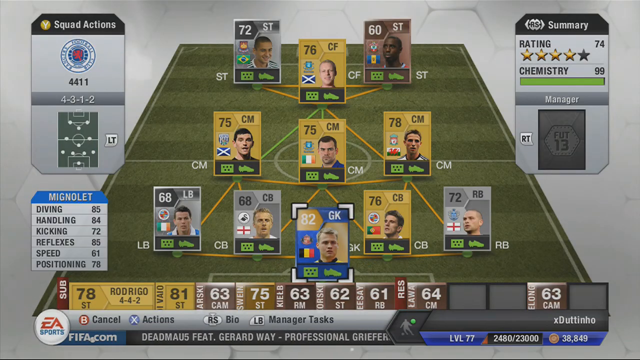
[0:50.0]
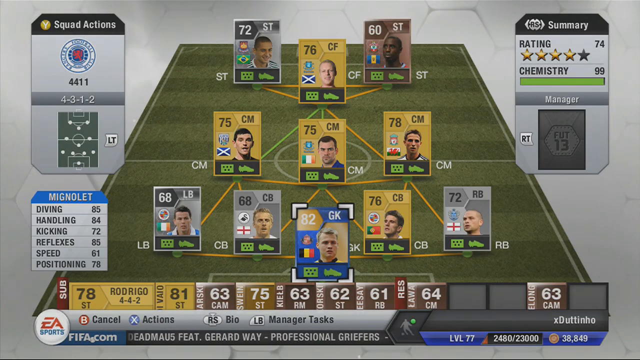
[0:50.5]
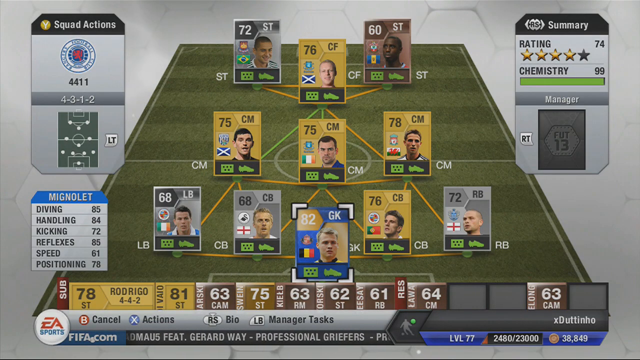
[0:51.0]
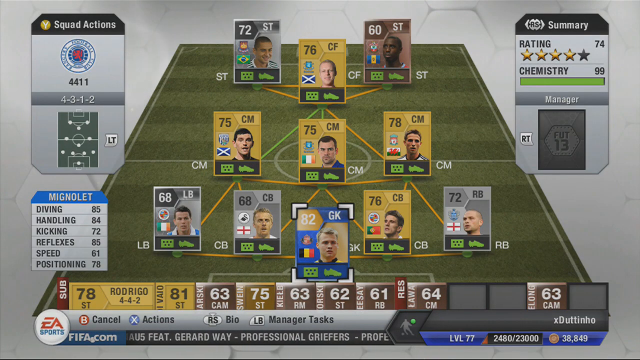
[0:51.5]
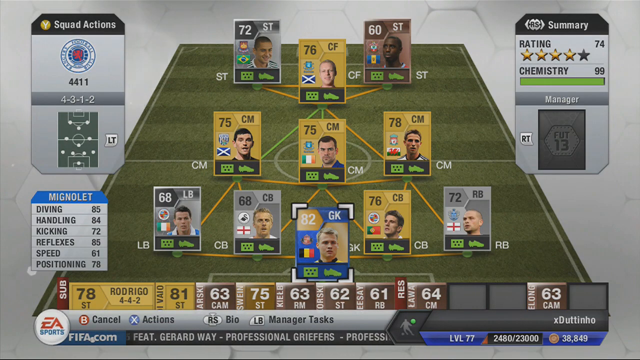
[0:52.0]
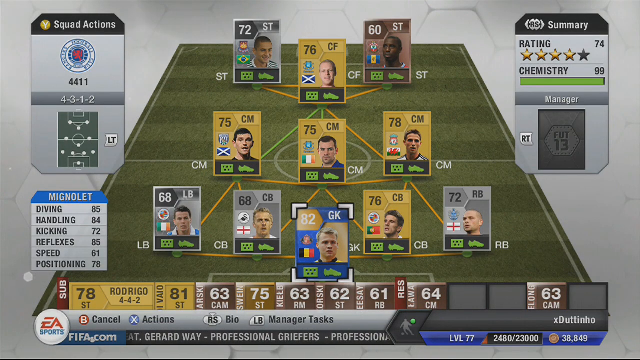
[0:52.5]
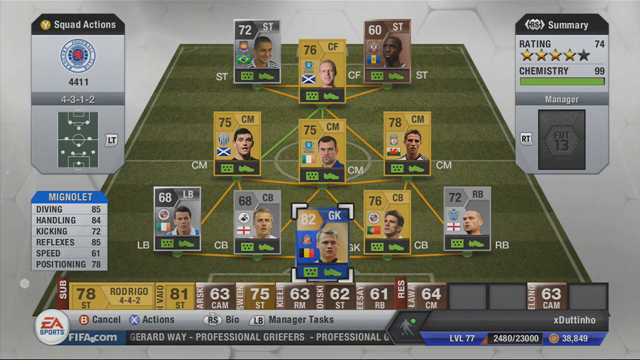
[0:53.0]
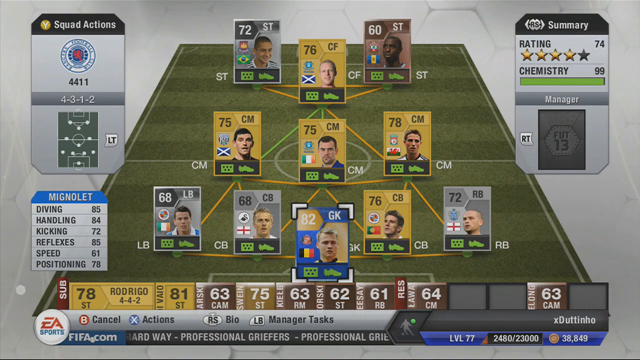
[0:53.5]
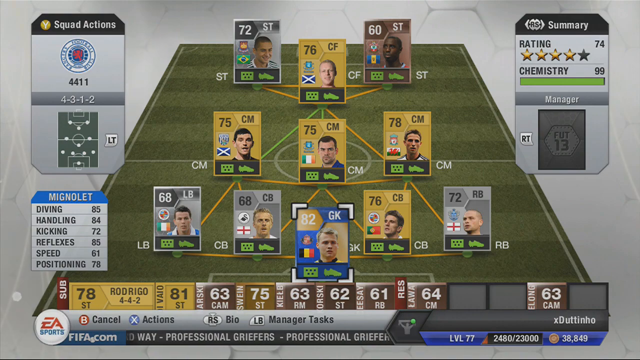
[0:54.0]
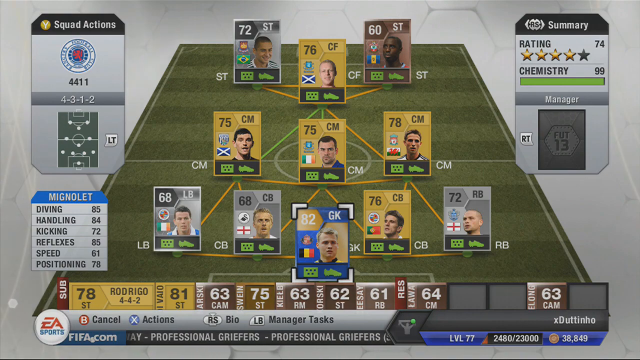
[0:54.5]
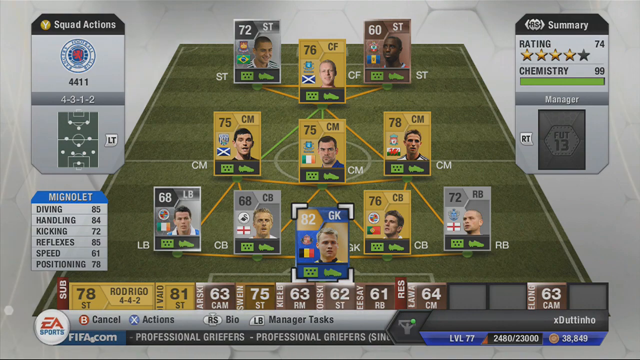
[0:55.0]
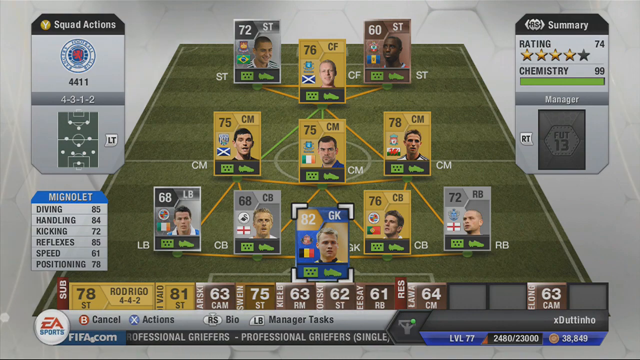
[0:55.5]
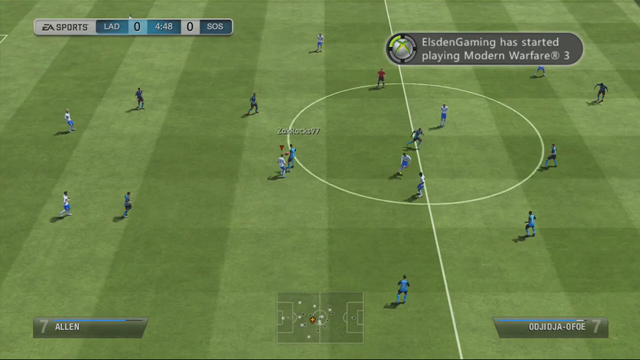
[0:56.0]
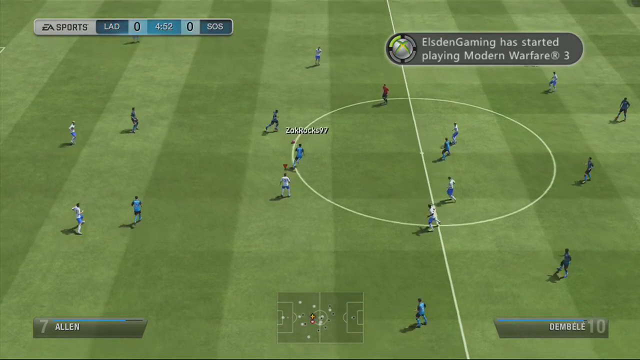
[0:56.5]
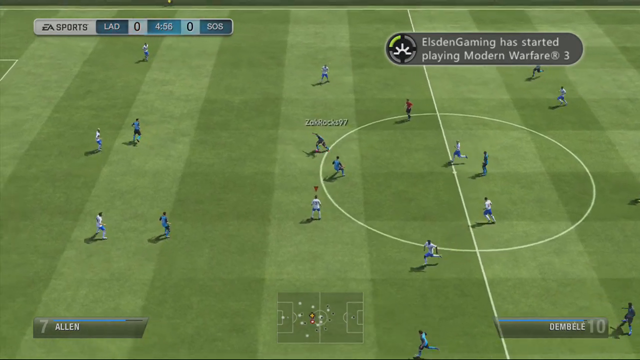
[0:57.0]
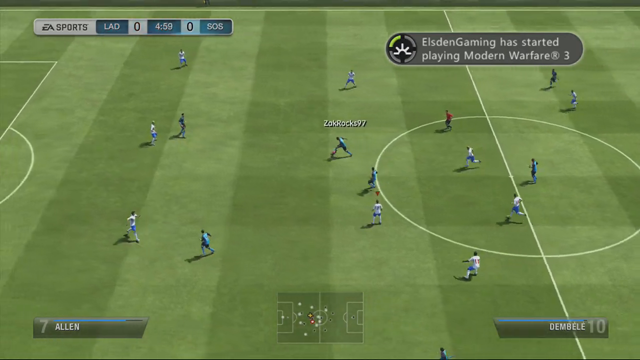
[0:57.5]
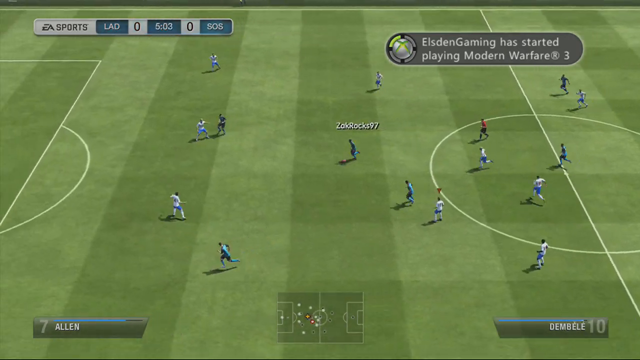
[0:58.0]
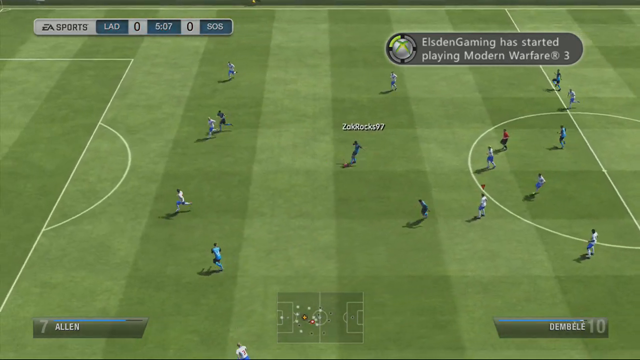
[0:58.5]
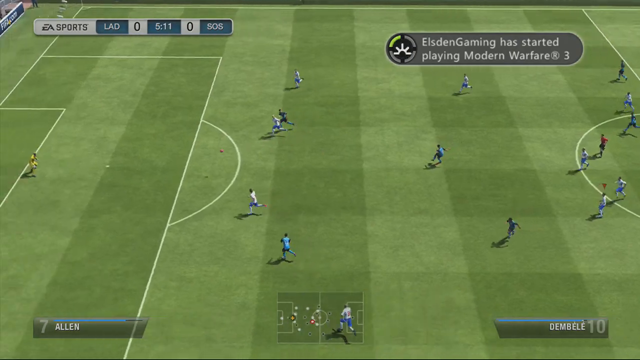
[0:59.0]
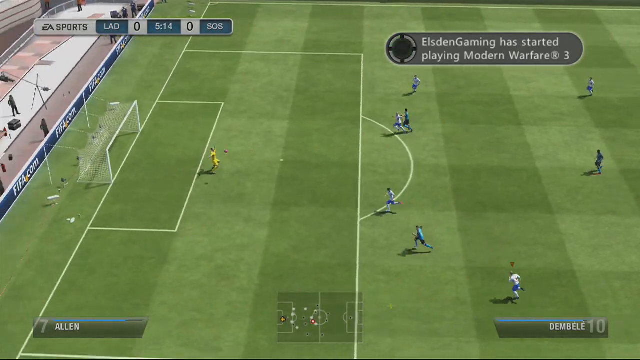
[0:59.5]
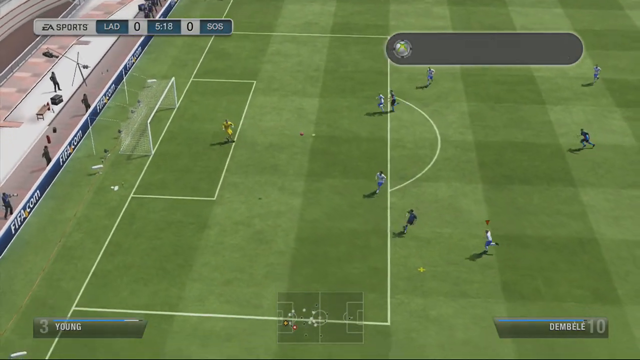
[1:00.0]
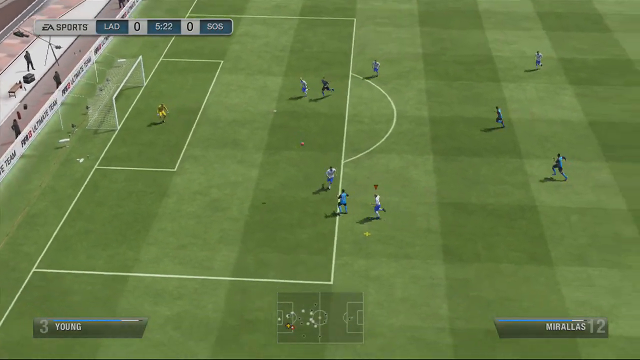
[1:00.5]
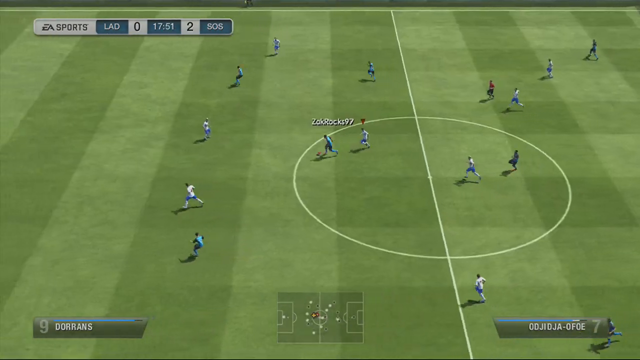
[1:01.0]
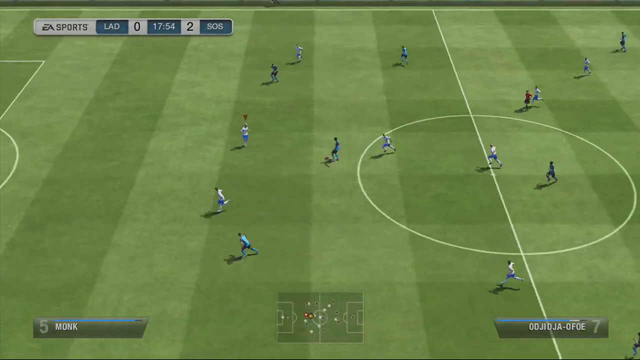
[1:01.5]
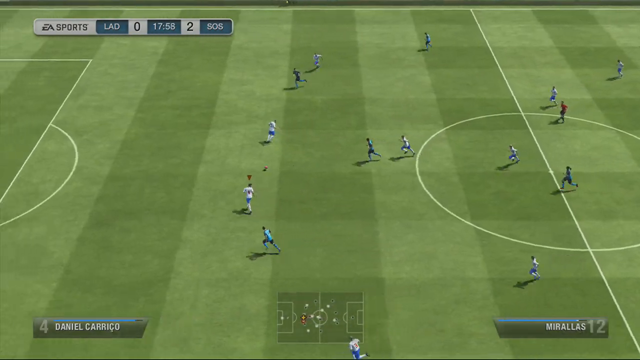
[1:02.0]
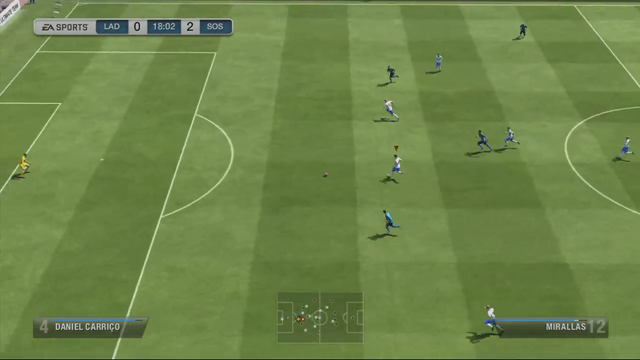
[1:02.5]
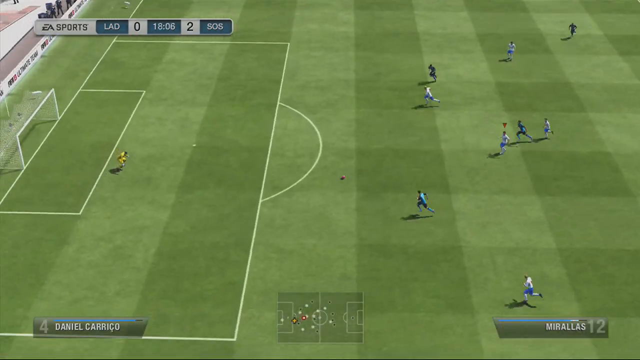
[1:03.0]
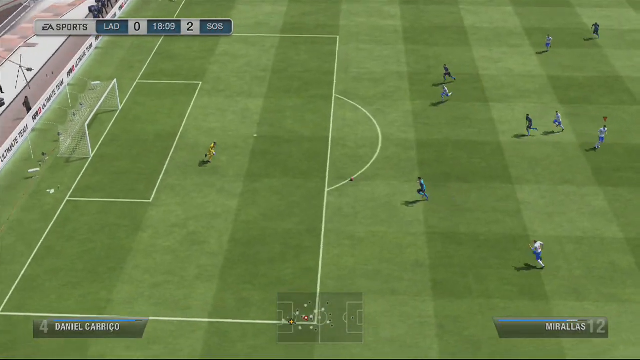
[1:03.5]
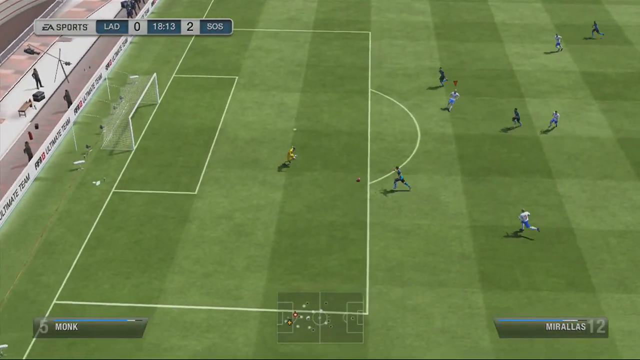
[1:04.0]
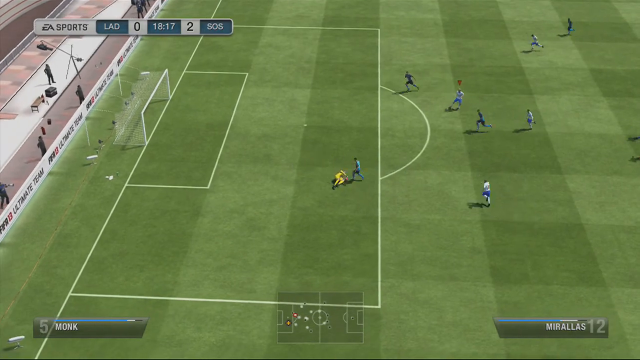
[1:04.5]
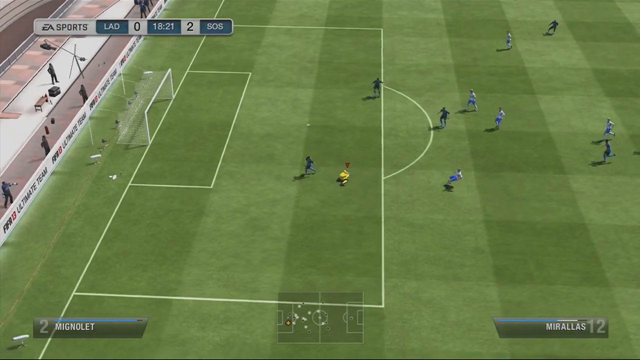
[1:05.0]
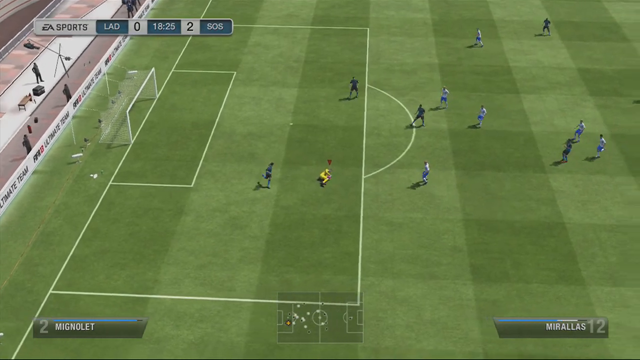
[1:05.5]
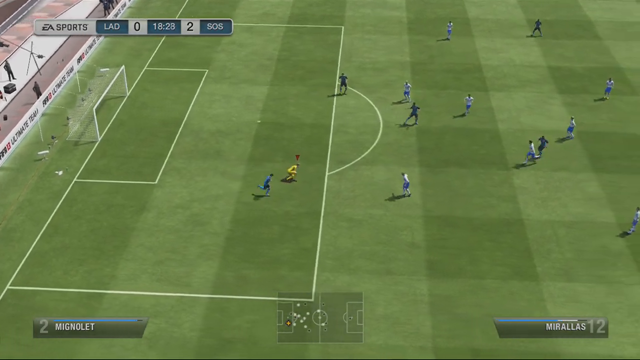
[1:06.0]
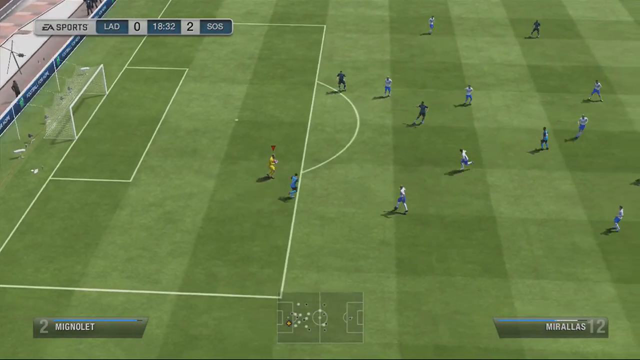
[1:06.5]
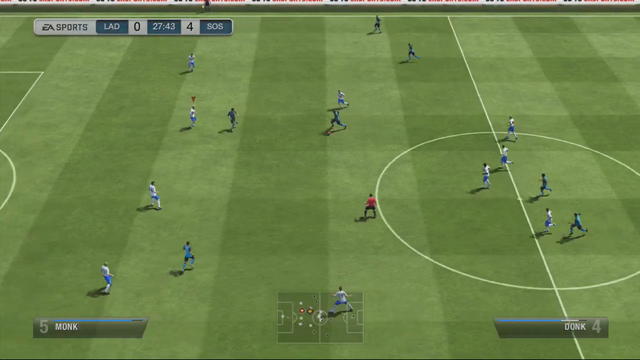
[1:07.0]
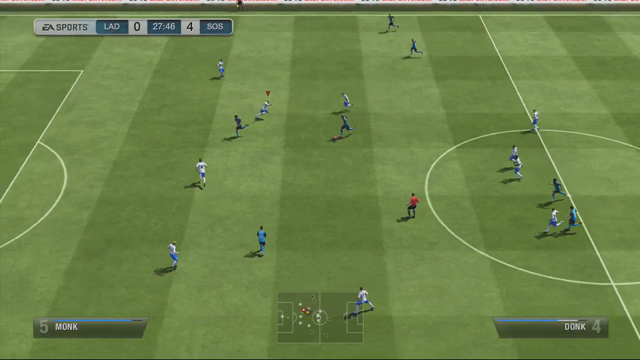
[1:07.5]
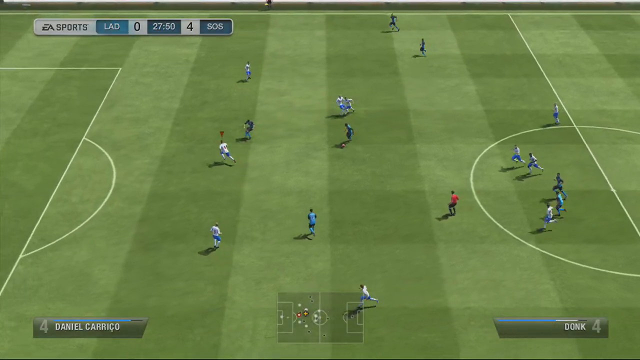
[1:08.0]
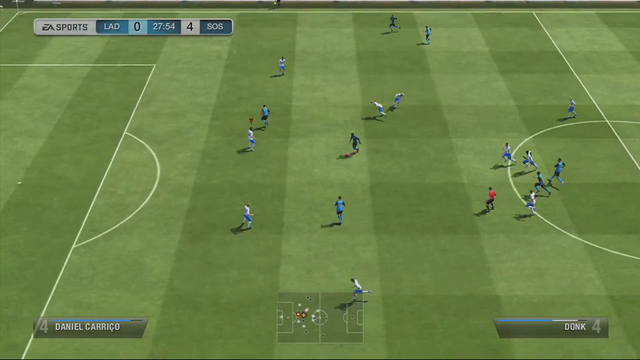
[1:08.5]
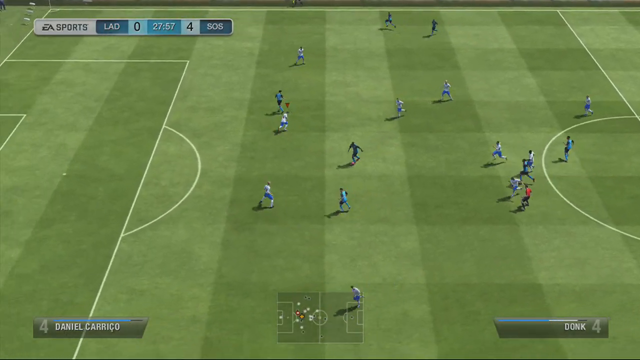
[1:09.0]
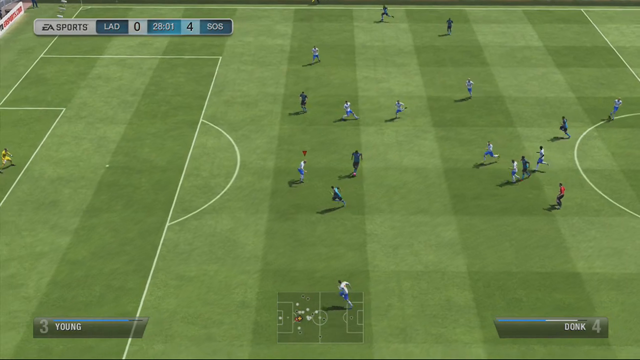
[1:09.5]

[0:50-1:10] A video game soccer field is shown, dark green. At the top of the screen, at the end of the field, are three cards side by side with men's faces on them; beneath them is another row of three, and beneath those a row of five. Each card has a different number in its top left corner, apparently the players' jersey numbers. The video then cuts to live gameplay on the green field, where very small players run down the field. One runs and kicks the ball, sending it to a goalie standing in front of a white square with a net on it, and the goalie grabs the ball. In the top left corner is a white stripe with "sports" in blue, followed to the right by "LAD," then "0," then "18 18," then the number "2," then "SOS."